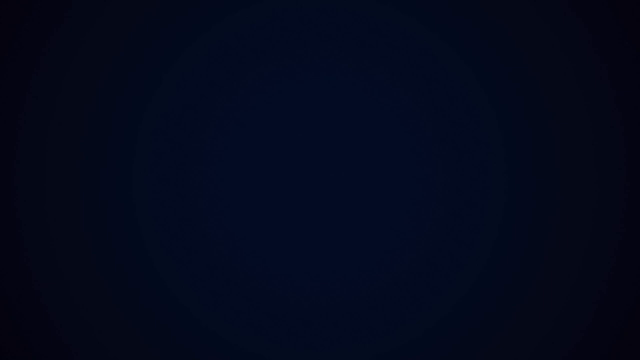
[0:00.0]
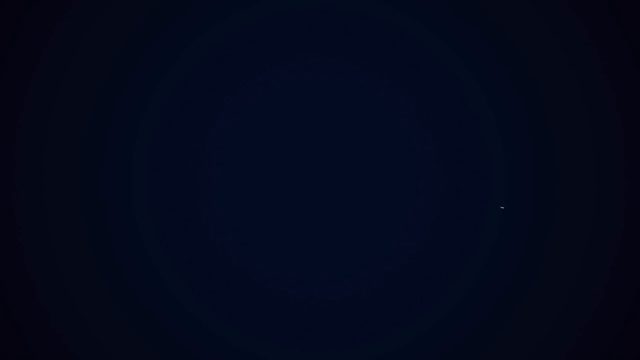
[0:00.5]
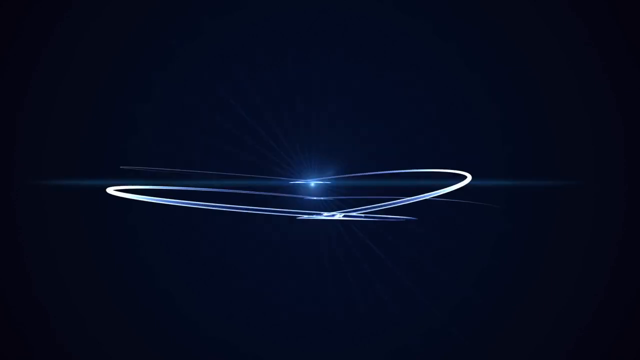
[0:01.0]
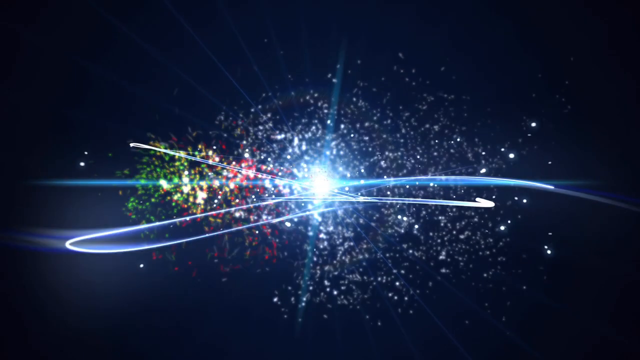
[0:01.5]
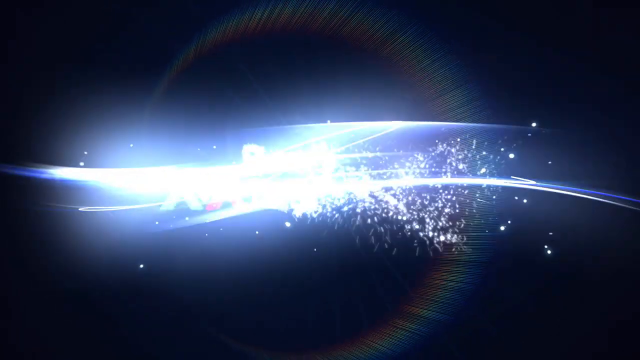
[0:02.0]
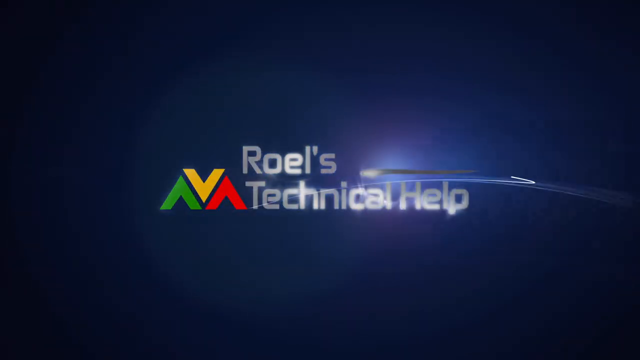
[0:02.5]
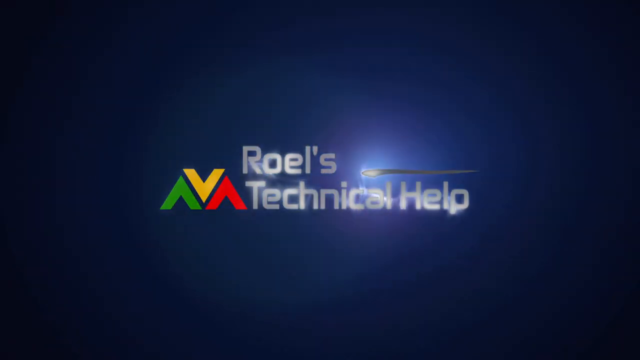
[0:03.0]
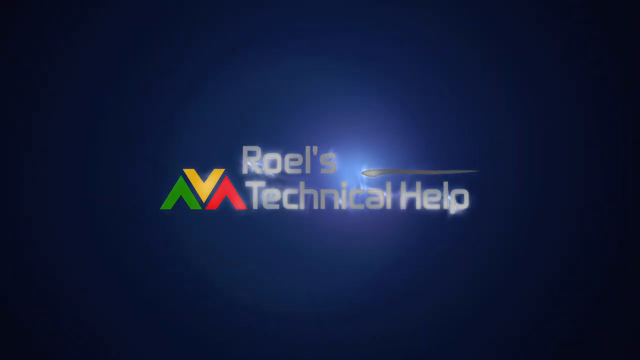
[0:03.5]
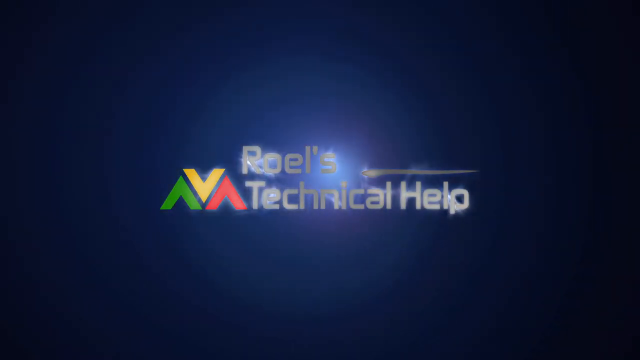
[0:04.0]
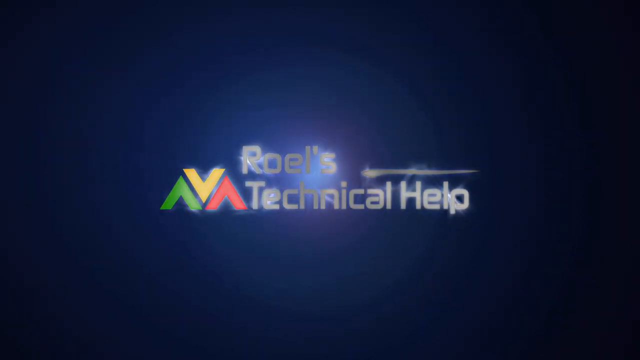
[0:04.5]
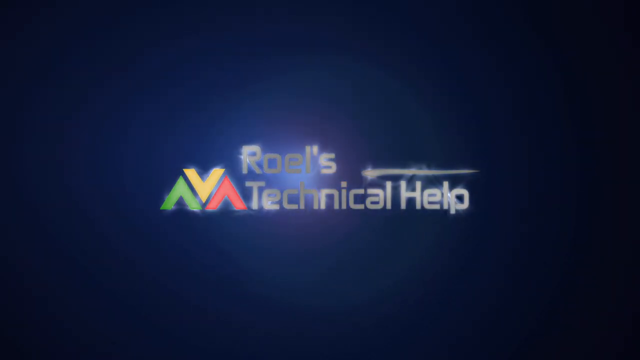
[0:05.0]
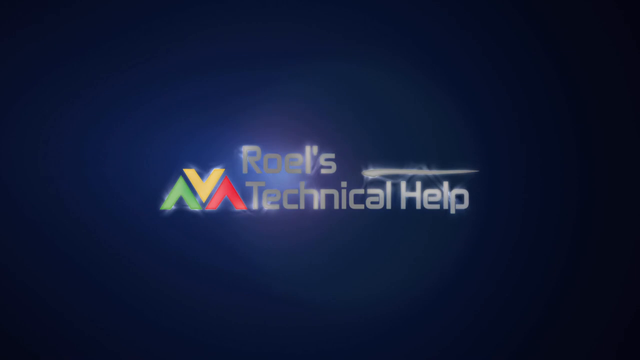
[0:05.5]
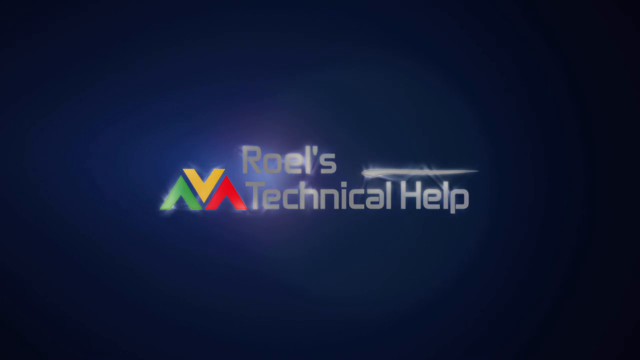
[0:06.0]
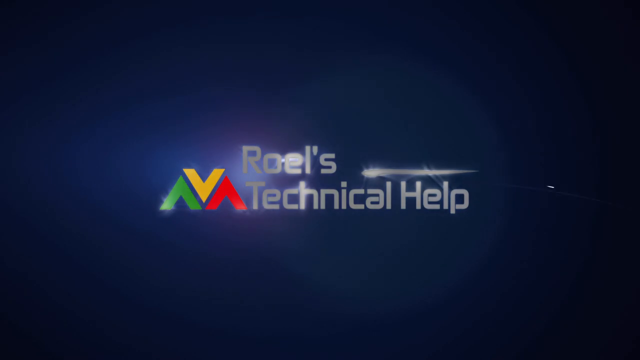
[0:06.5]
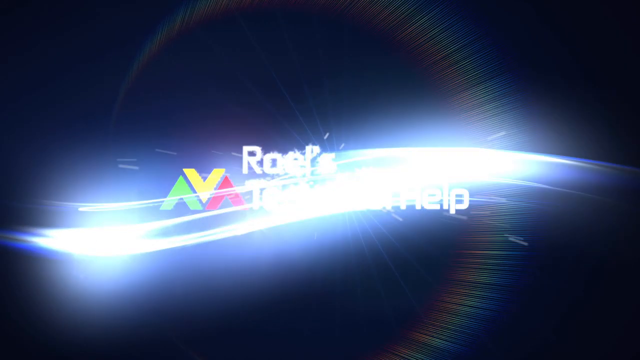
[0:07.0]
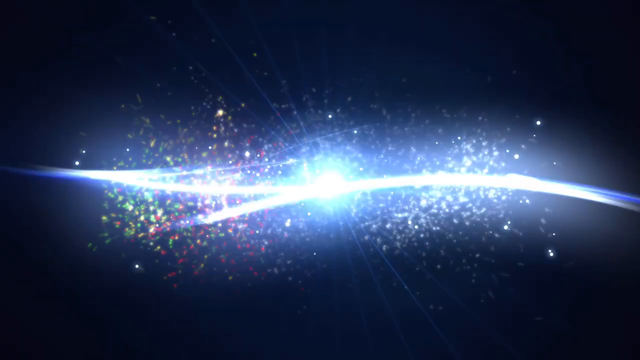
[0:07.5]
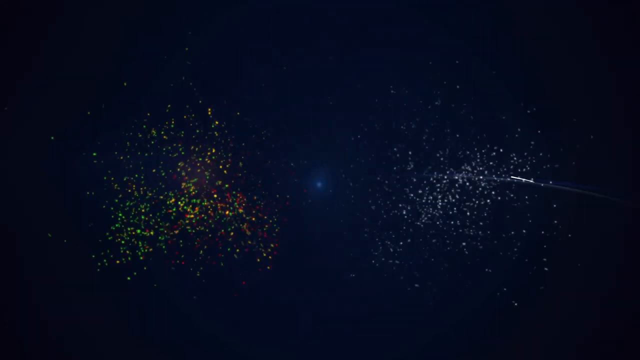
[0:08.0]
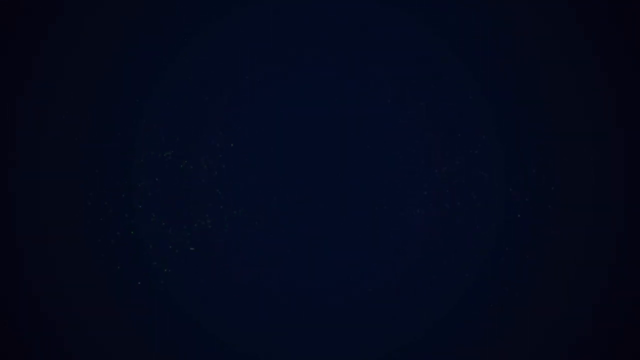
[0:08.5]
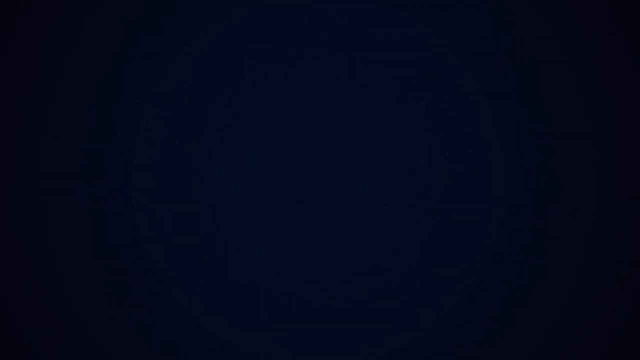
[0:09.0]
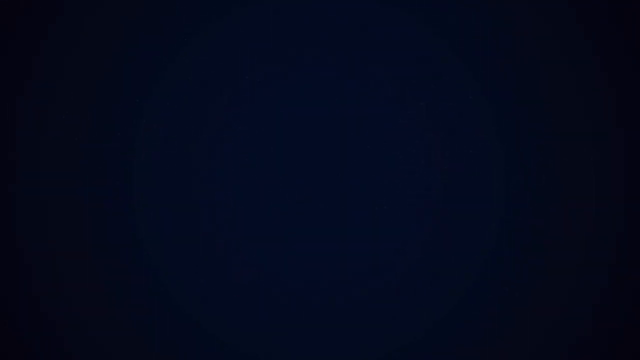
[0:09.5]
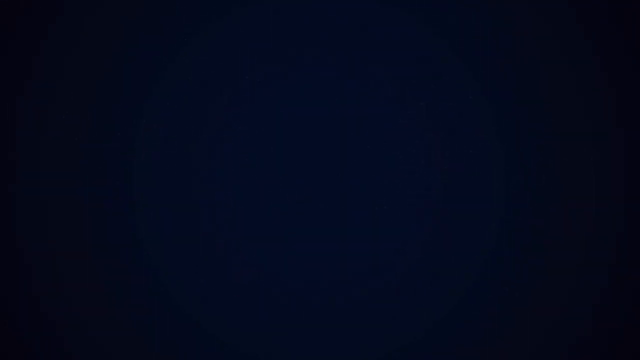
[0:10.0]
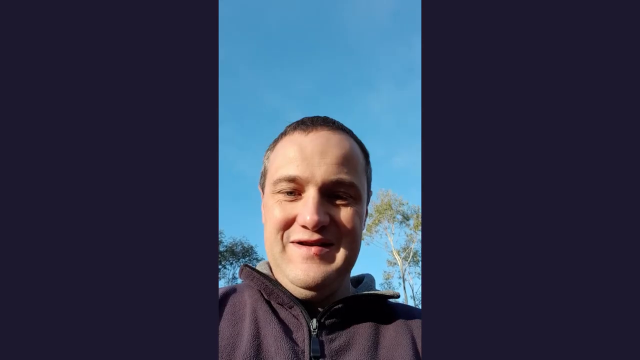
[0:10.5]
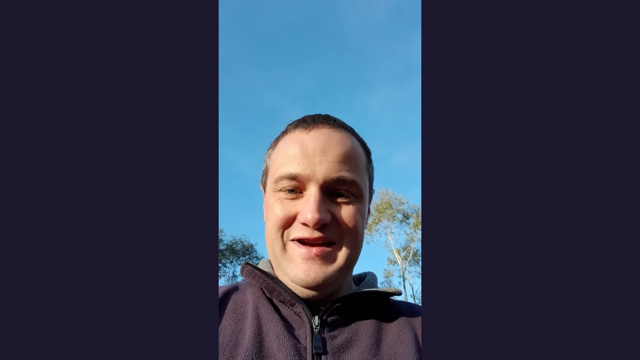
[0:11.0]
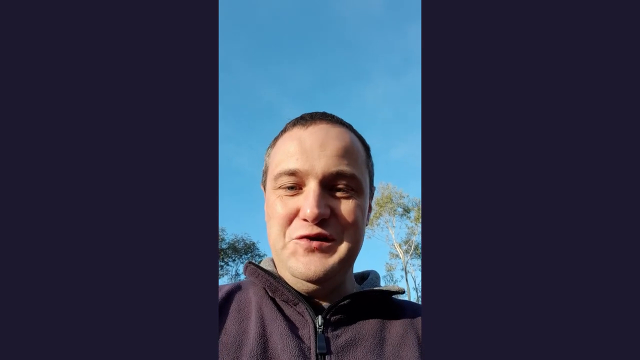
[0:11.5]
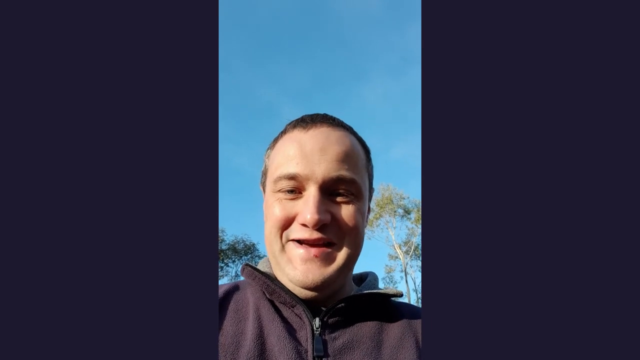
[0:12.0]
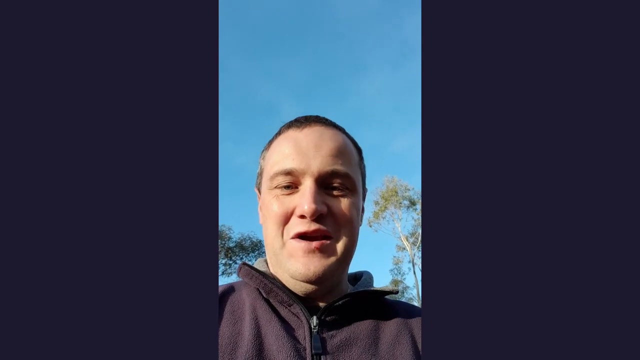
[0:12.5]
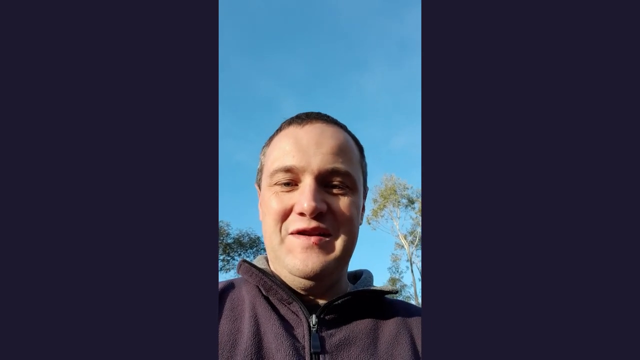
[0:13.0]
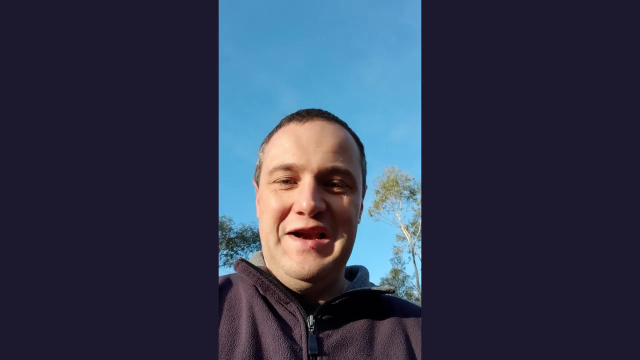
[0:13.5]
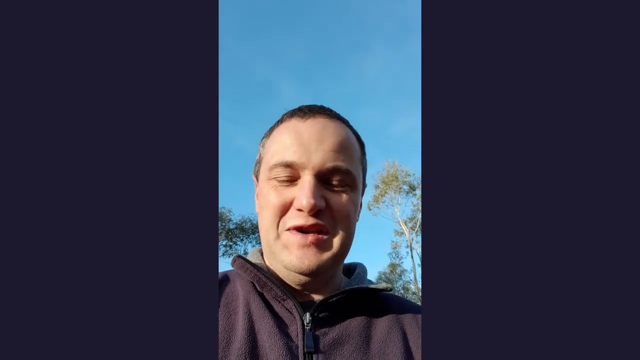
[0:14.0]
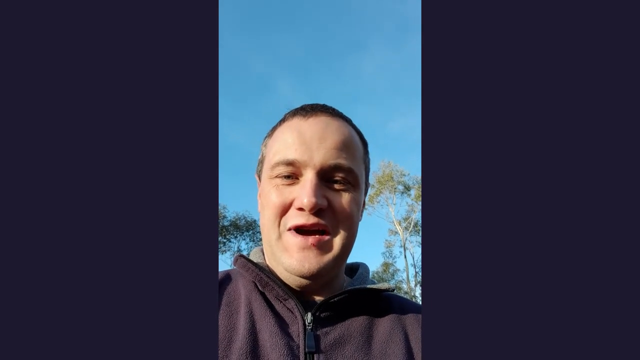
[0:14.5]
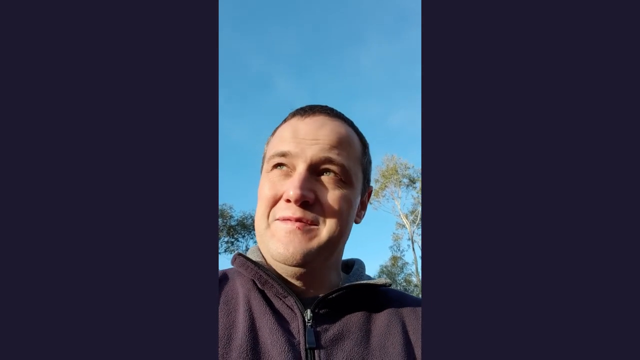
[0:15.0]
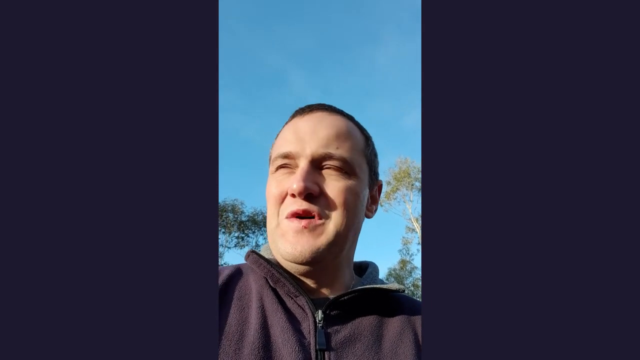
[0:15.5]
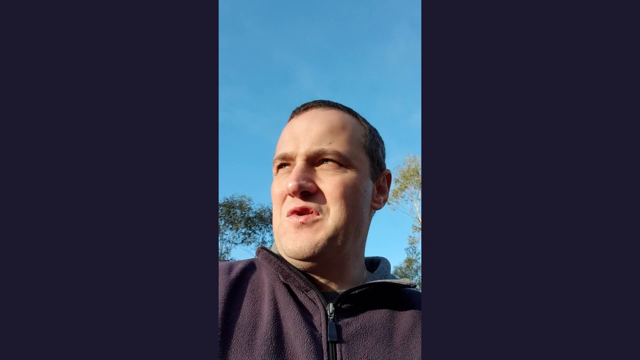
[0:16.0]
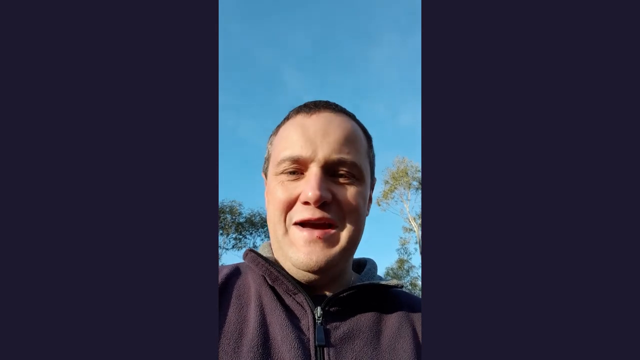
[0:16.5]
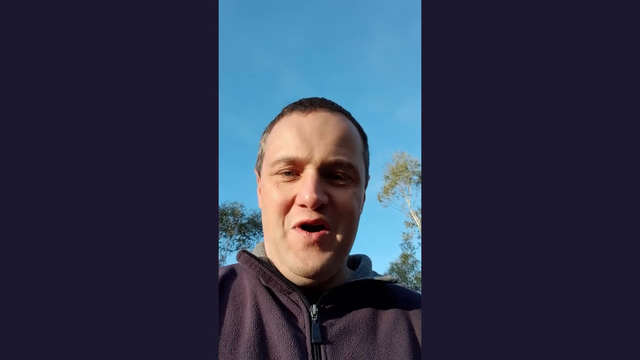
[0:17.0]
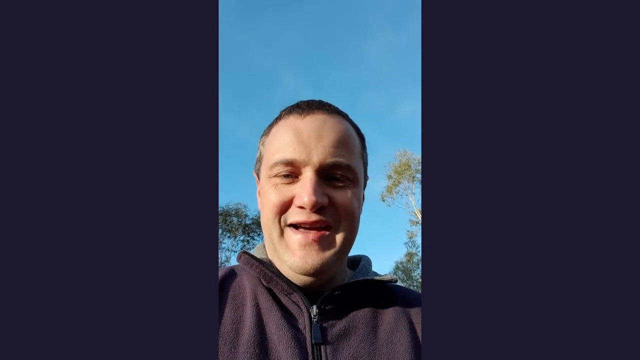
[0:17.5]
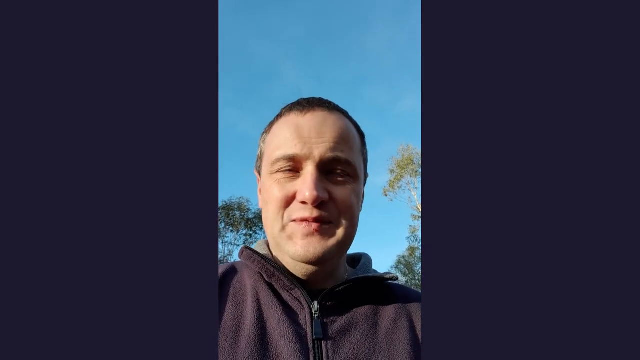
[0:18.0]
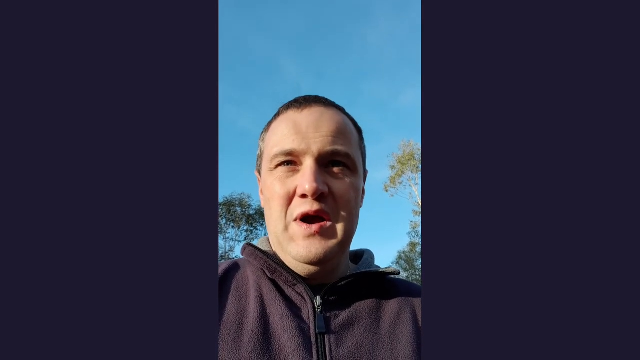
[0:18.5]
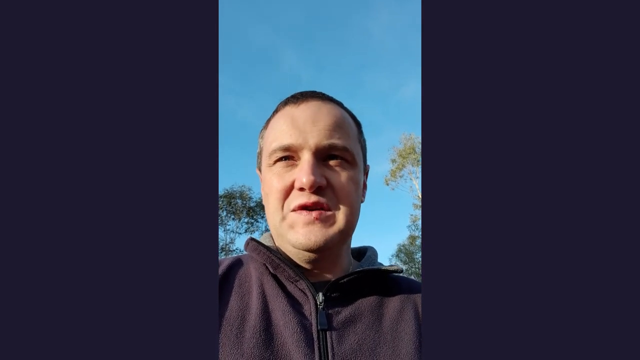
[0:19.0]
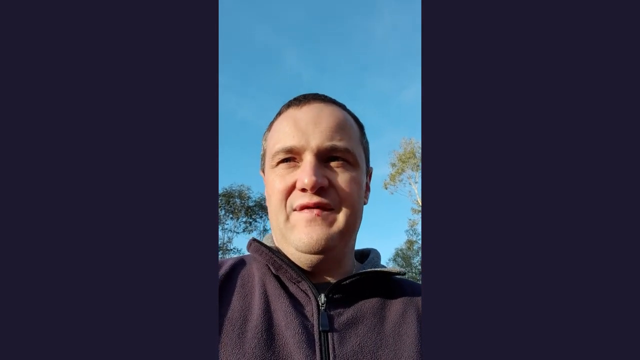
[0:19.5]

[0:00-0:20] The video opens with a heading reading "Roels Technical Help," with a symbol next to it made of two upside-down Vs and one regular V in green, orange and red. After the symbol disappears, the scene changes to a man talking into the camera. He has short black hair, wears a zipped-up hood and looks directly at the camera. The video has black bars on either side of the frame. Behind him is a blue sky with multiple trees. No one else appears; the shot stays on him talking alone.